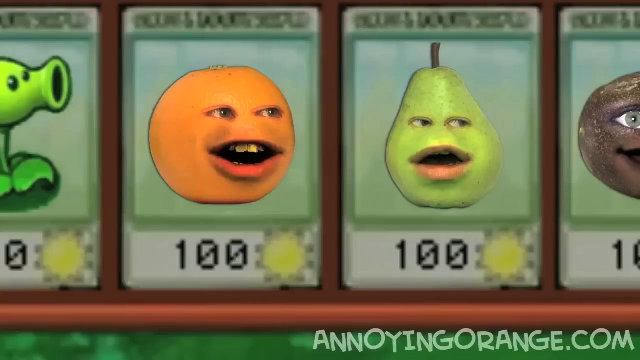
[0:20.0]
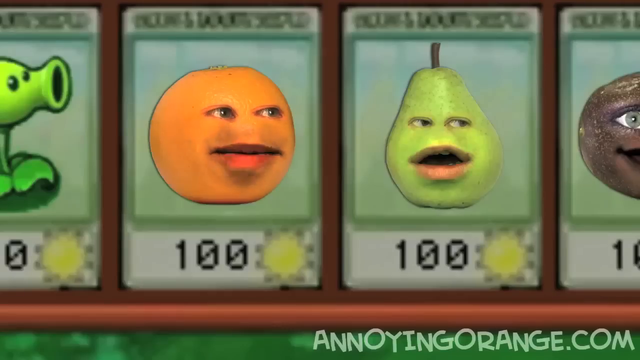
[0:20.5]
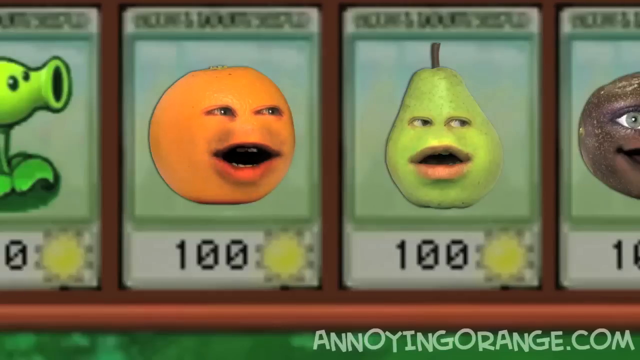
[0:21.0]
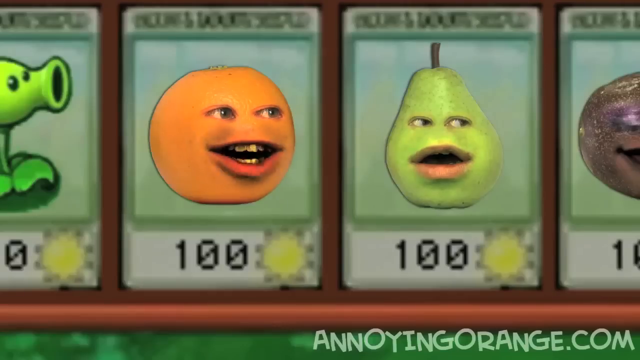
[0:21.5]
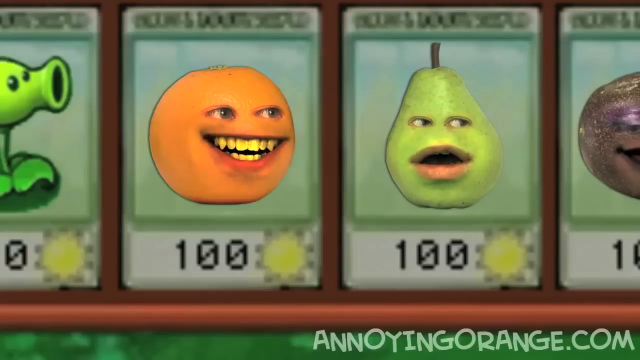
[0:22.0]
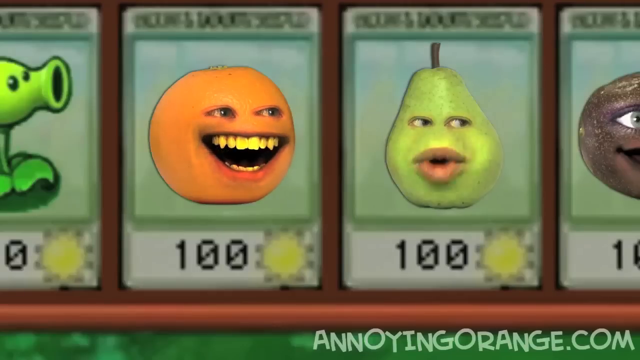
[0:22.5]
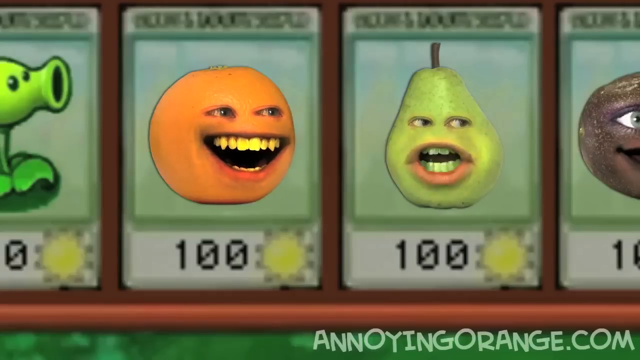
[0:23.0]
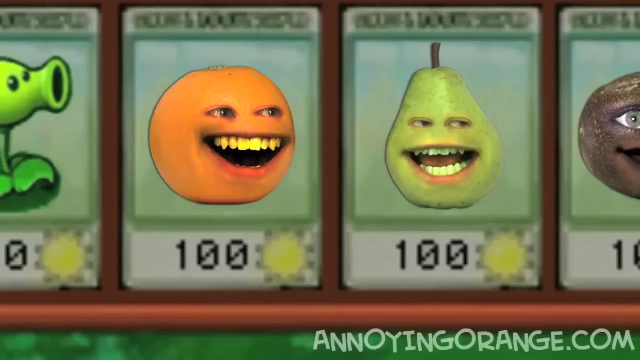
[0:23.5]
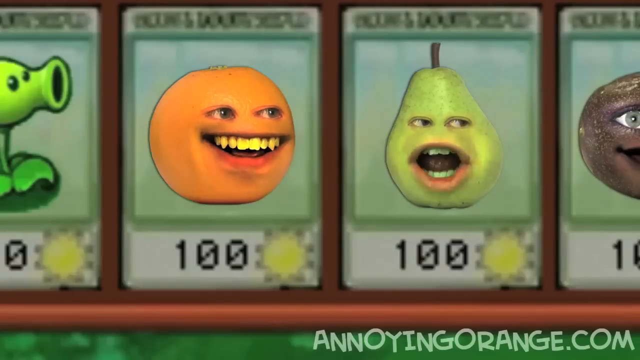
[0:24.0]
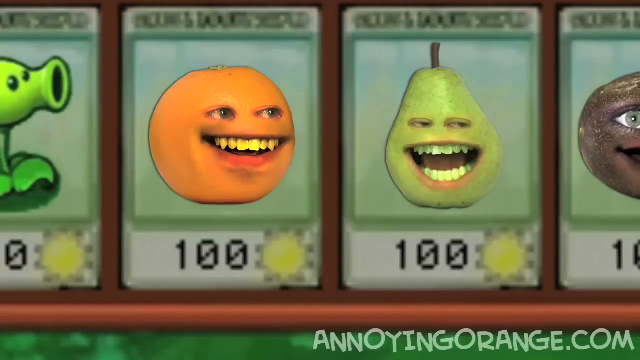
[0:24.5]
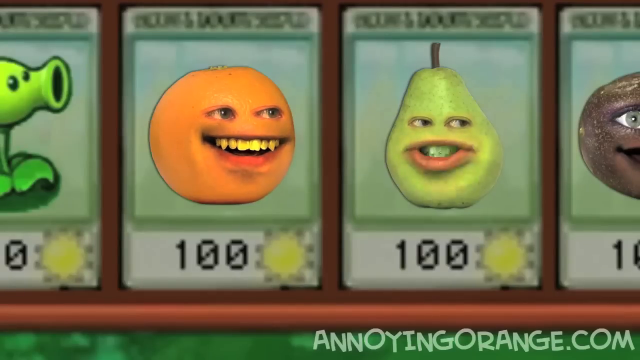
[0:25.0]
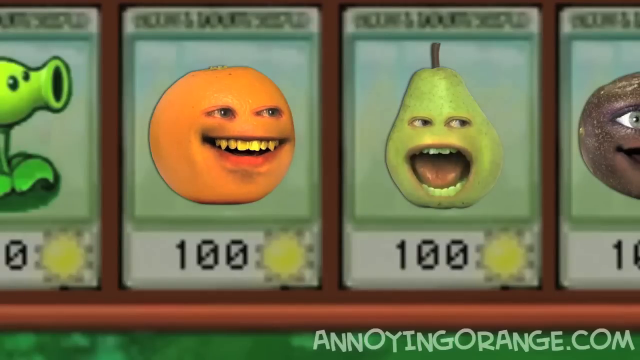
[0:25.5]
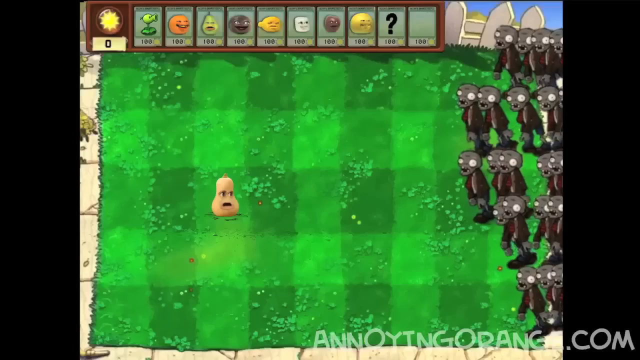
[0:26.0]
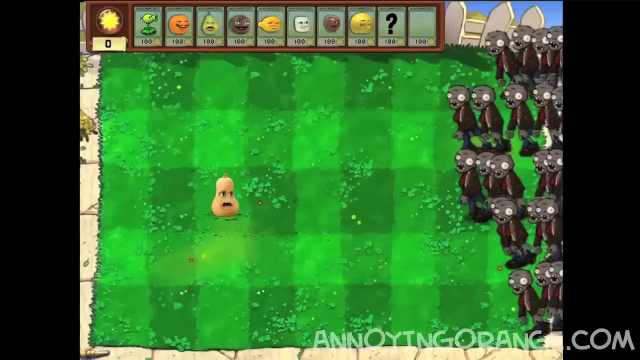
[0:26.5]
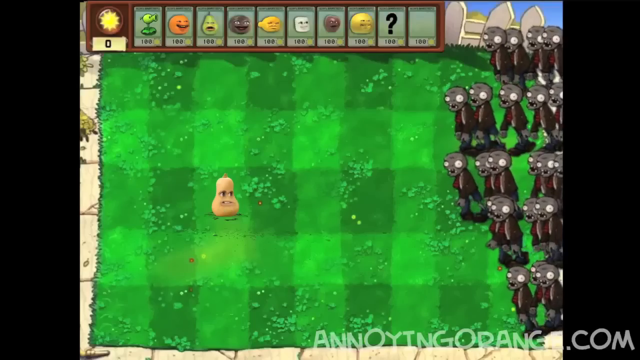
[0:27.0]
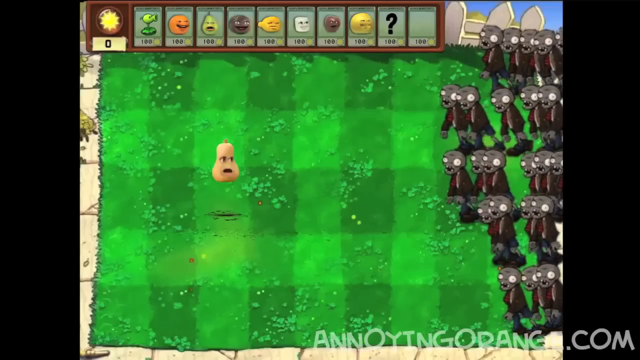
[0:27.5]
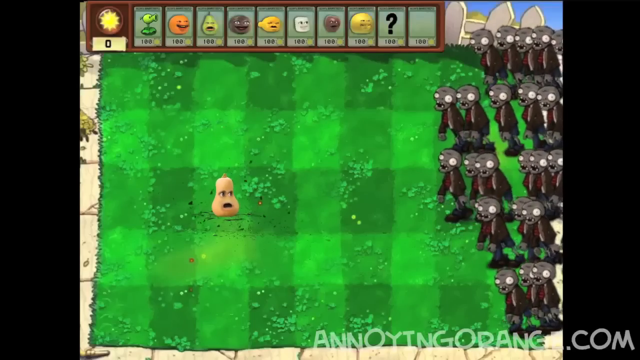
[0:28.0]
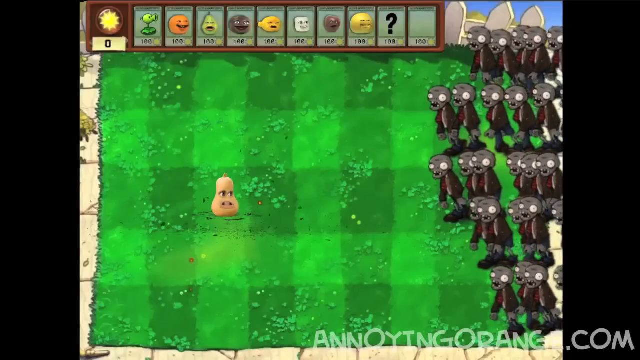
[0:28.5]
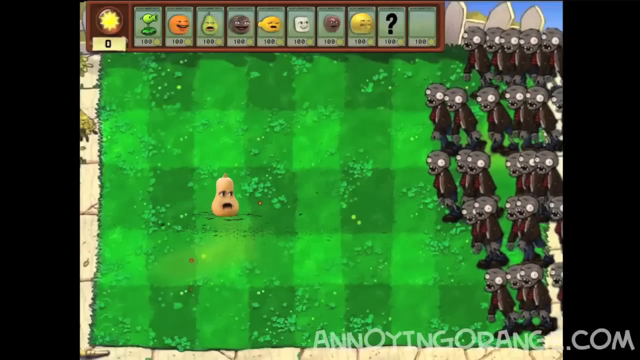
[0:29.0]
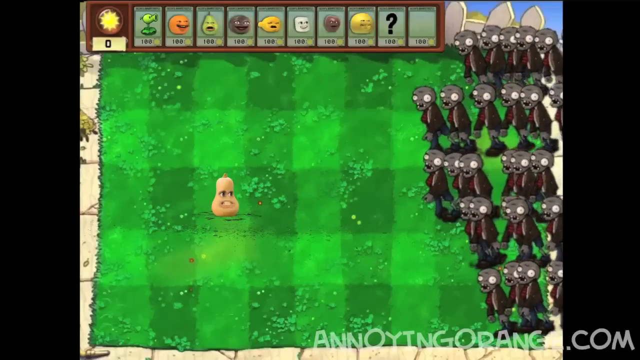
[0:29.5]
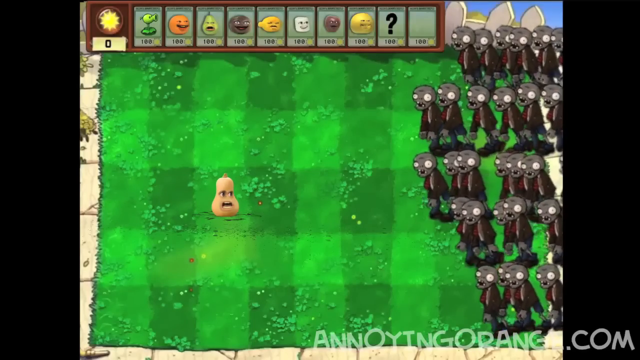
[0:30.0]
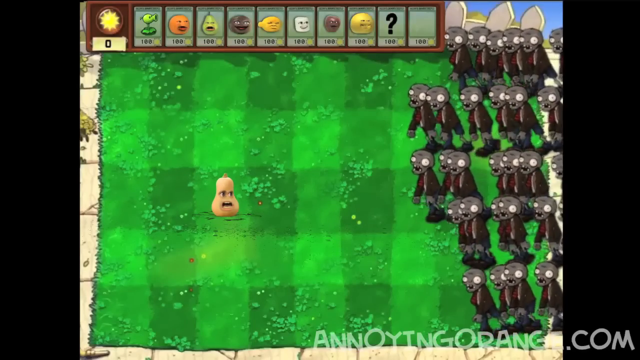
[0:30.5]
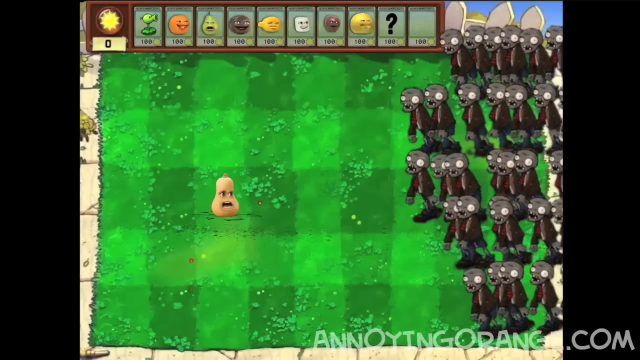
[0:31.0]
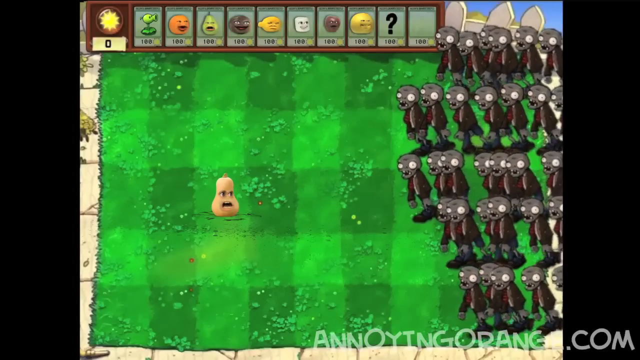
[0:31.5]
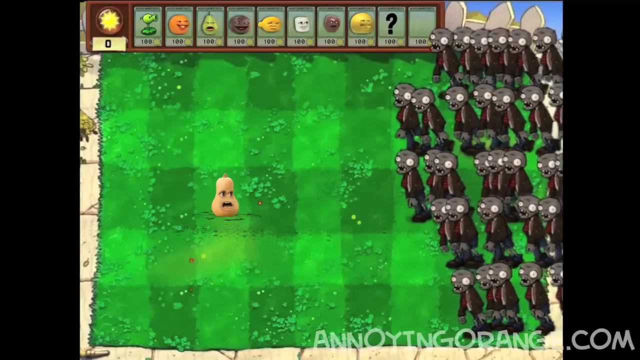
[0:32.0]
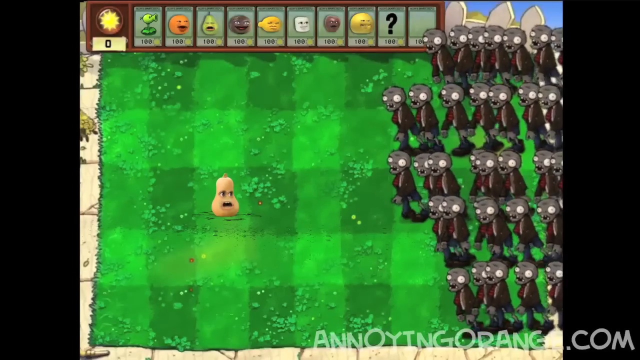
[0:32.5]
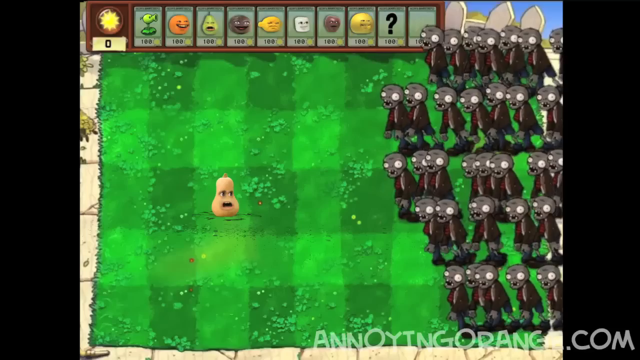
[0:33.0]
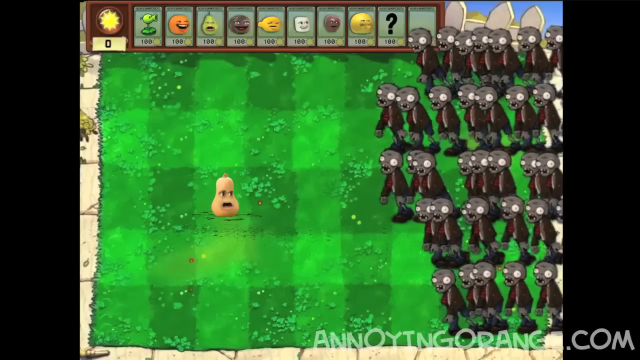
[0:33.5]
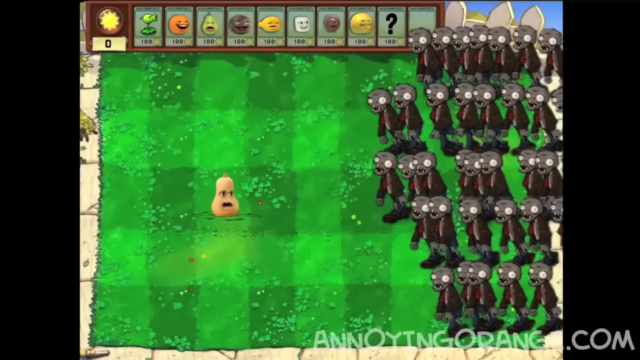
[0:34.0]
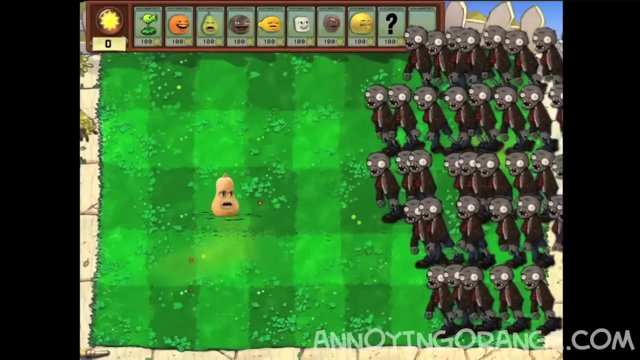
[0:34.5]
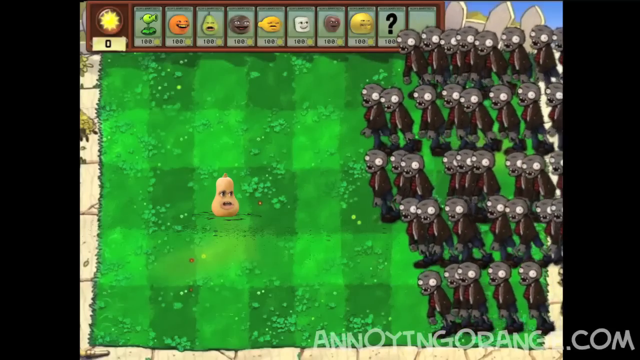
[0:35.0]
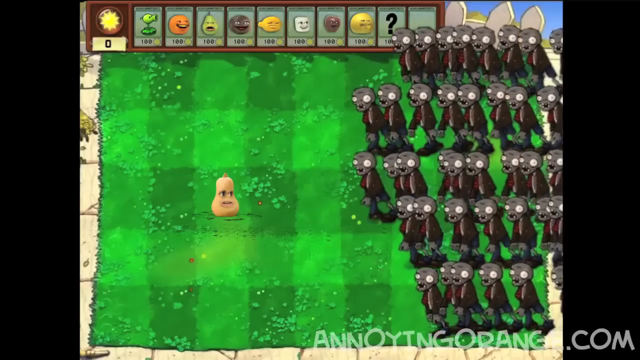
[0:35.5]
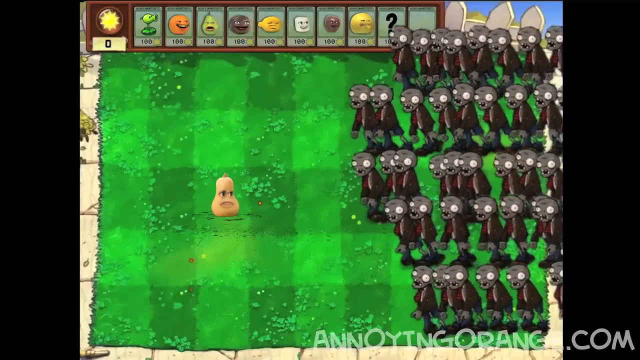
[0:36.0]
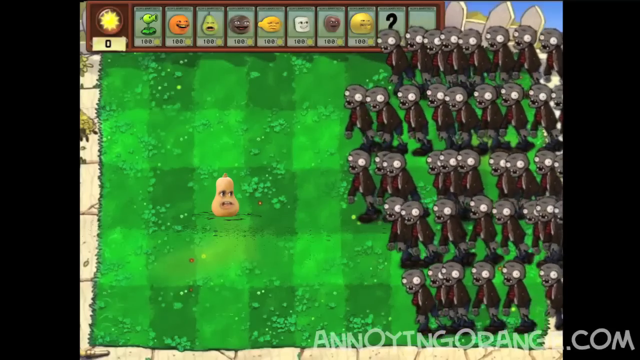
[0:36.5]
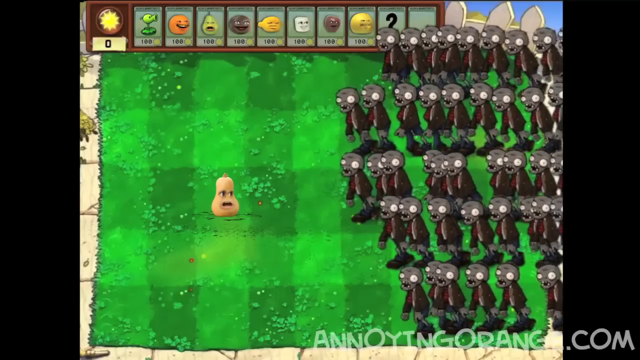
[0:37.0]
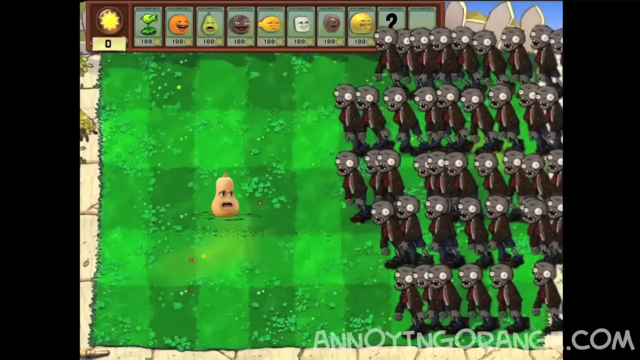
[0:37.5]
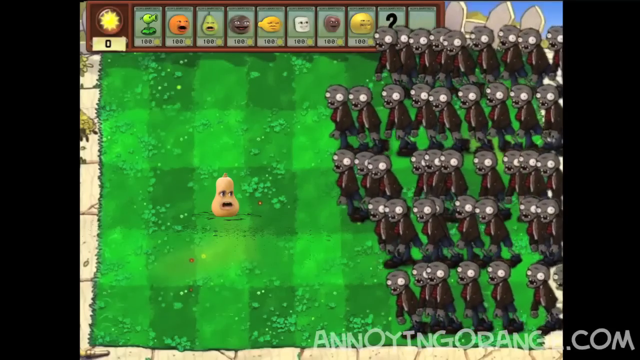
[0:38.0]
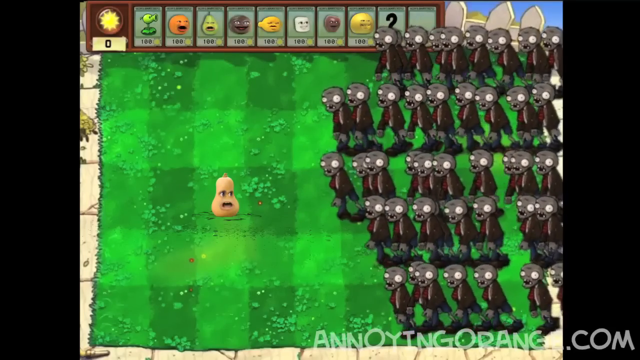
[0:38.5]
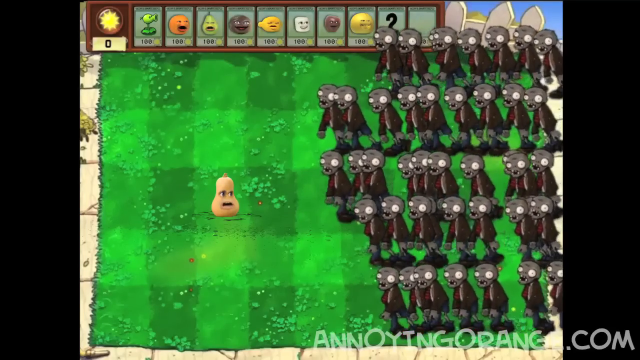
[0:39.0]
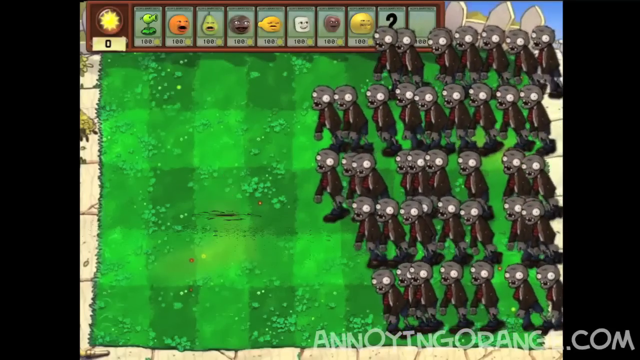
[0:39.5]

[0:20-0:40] In the top bar, the orange continues to speak with its very human mouth, breaking into a smile. Next to it, a pear with very human features starts talking. The view zooms back out to the full garden as what appear to be lumbering zombies move from the right of the screen toward the left, where the butternut squash is sitting on the lawn, looking very scared. The zombies have grey heads and large white eyes and wear dirty-looking brown suits. The squash looks more concerned as the orange in the top bar starts speaking again. The squash appears to start speaking, then leaps up, moving in an arc over to the right, and comes crashing down on top of the zombies with significant impact, causing the ground to fracture.